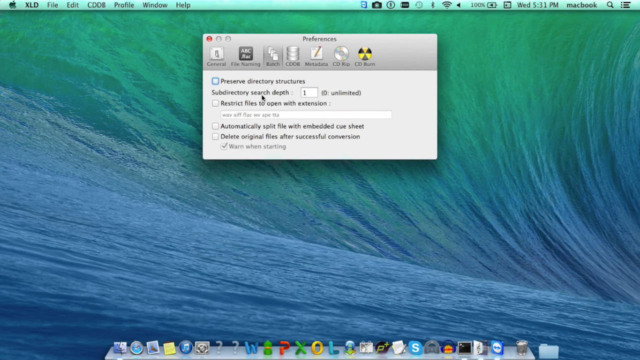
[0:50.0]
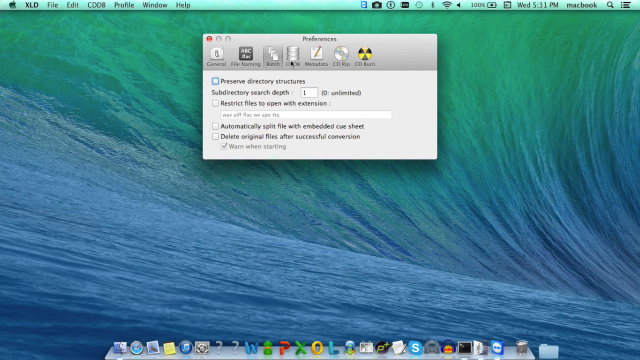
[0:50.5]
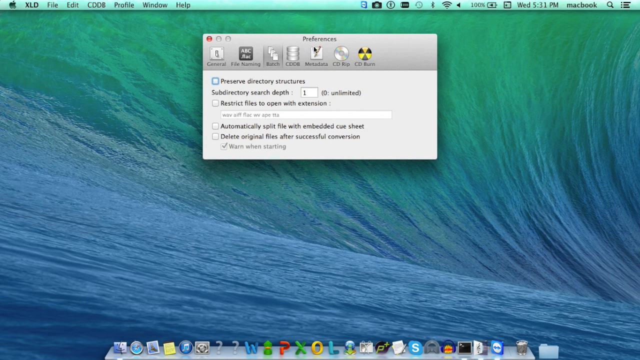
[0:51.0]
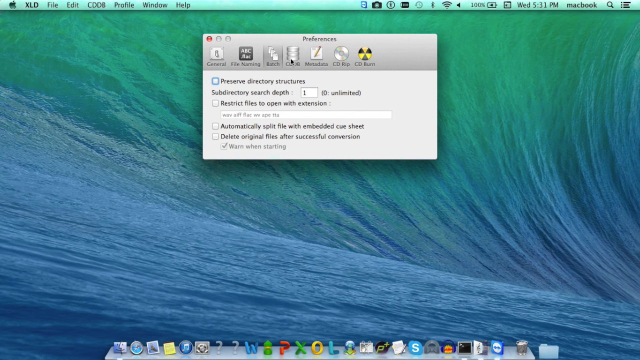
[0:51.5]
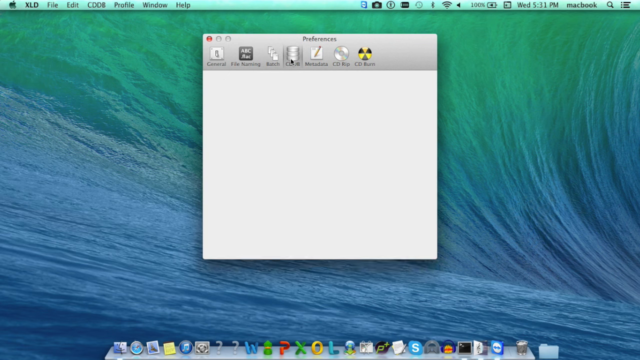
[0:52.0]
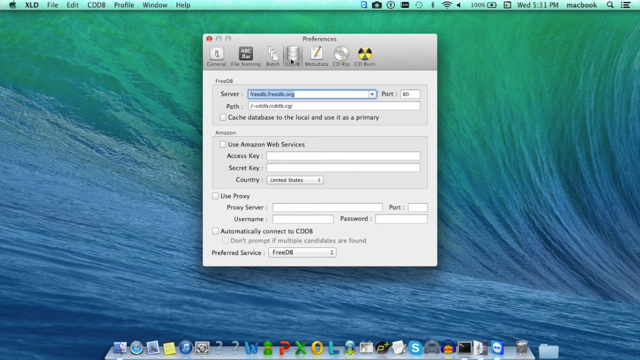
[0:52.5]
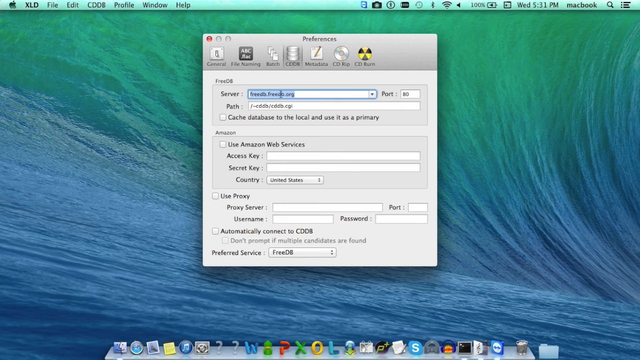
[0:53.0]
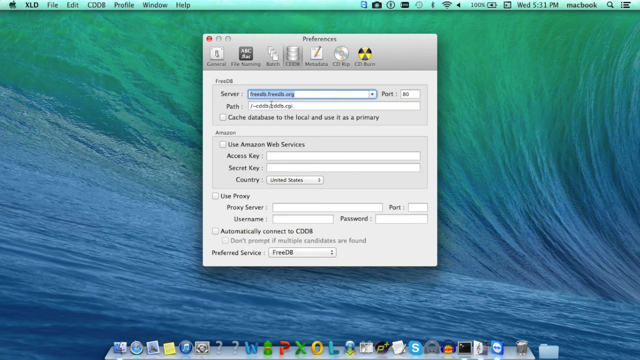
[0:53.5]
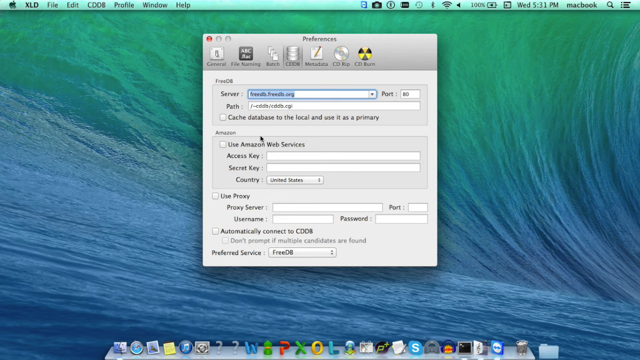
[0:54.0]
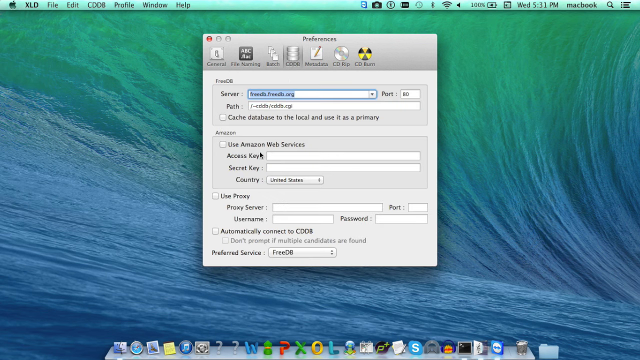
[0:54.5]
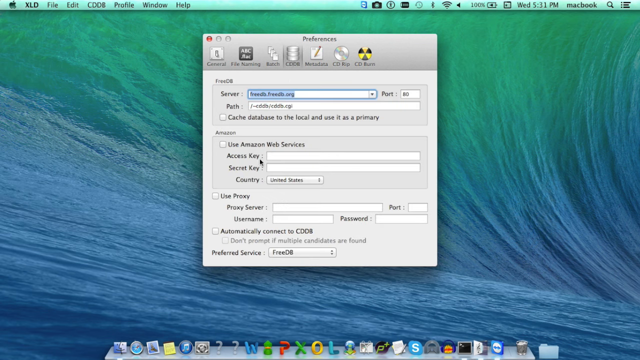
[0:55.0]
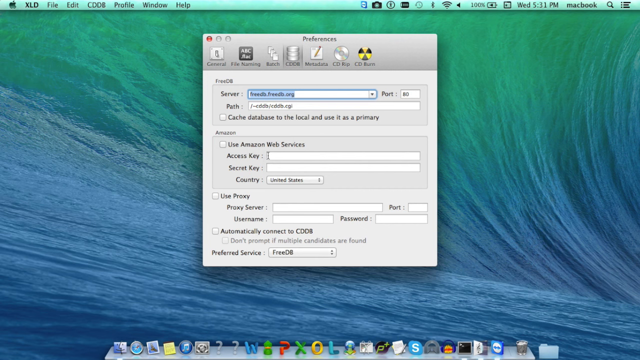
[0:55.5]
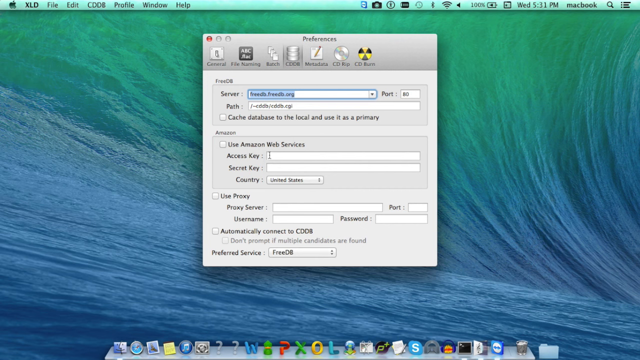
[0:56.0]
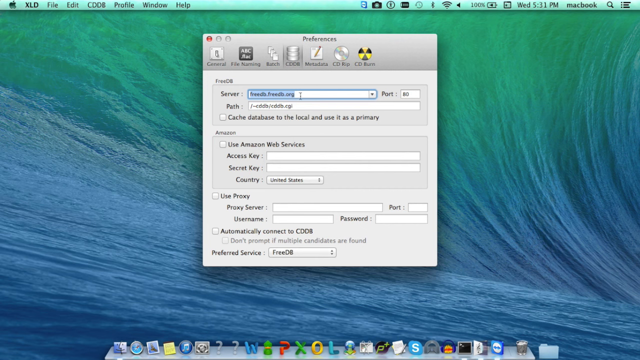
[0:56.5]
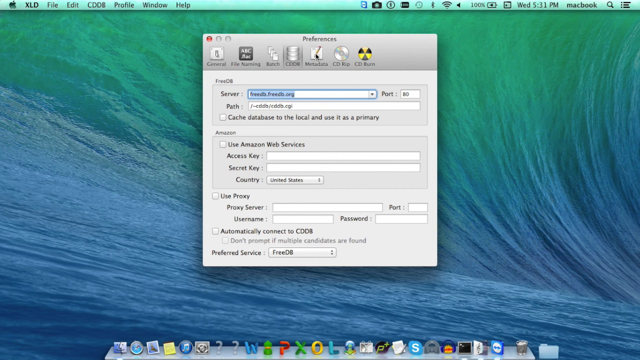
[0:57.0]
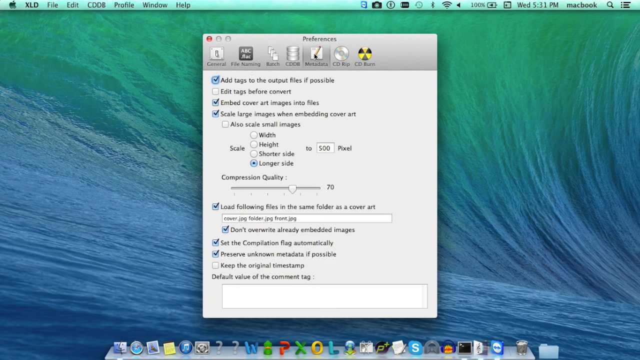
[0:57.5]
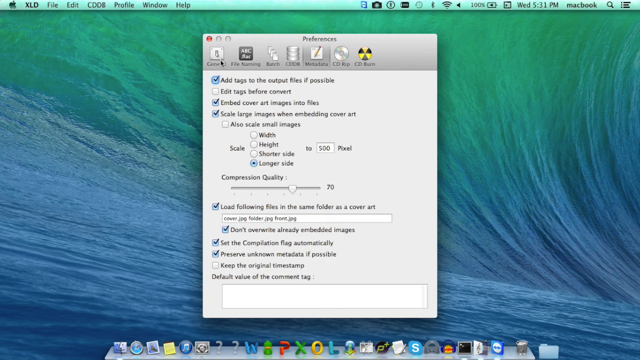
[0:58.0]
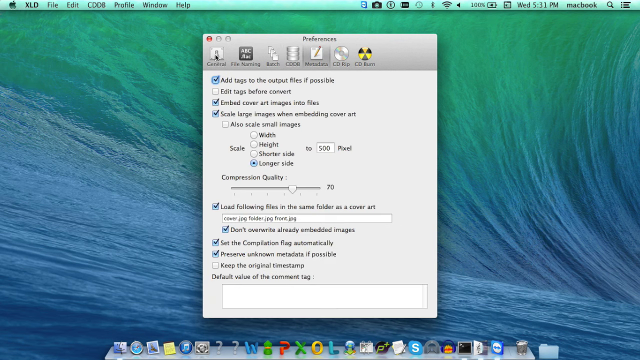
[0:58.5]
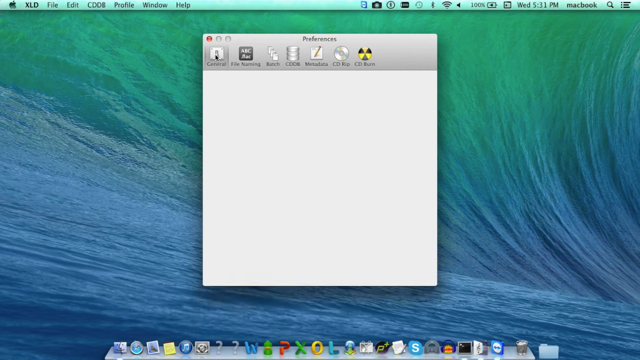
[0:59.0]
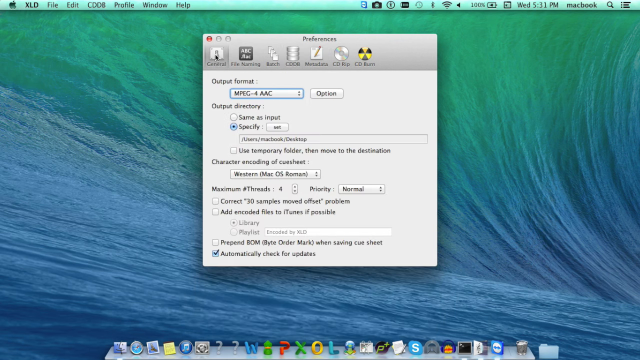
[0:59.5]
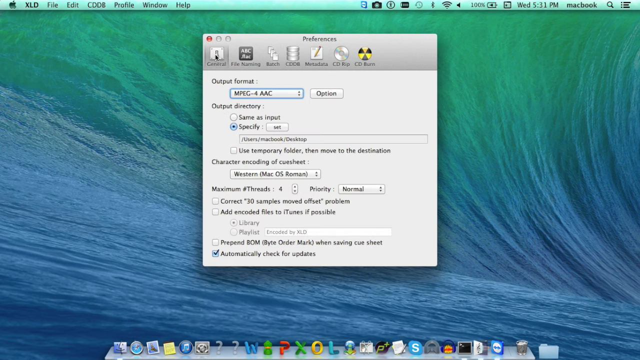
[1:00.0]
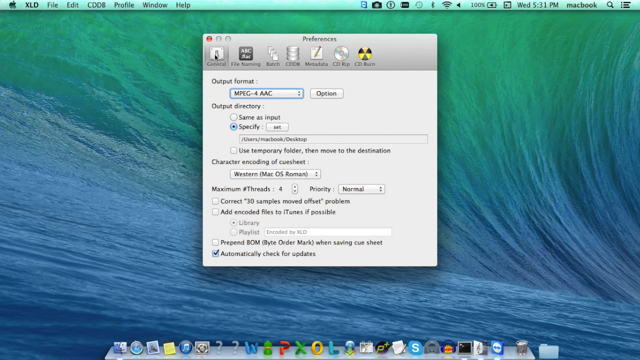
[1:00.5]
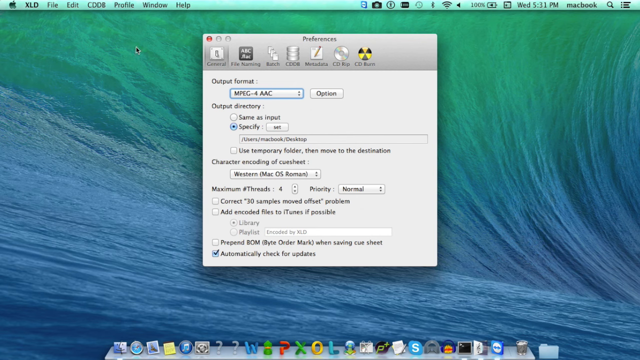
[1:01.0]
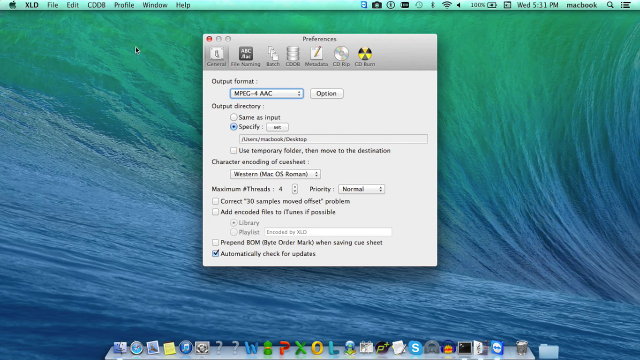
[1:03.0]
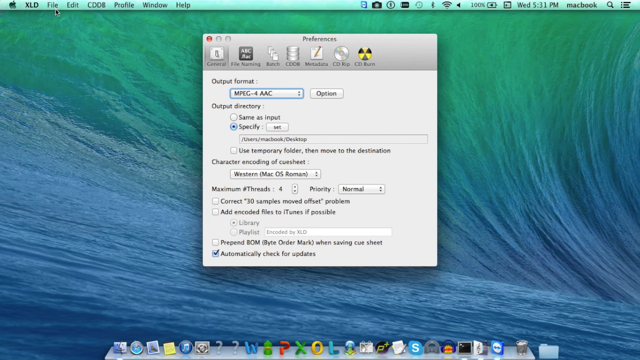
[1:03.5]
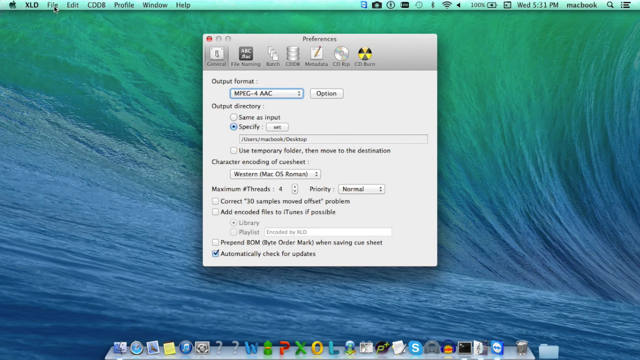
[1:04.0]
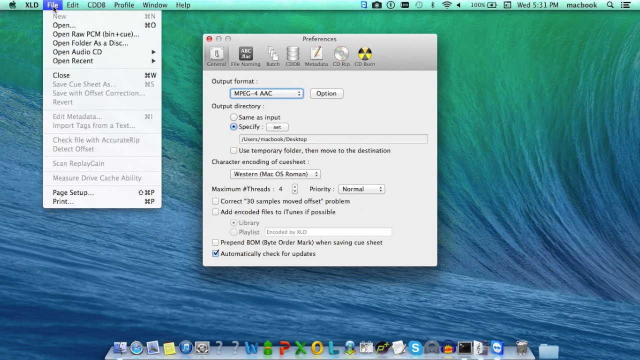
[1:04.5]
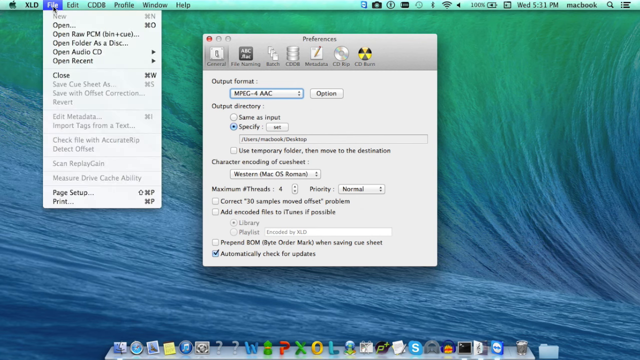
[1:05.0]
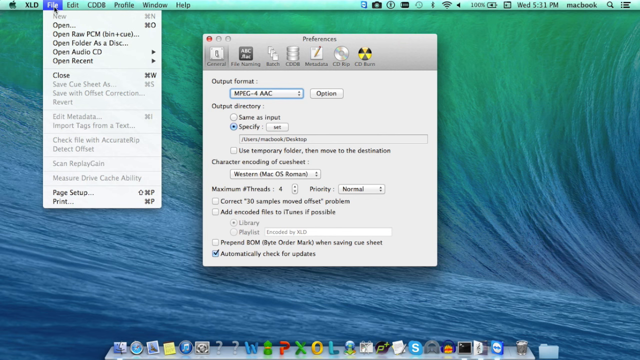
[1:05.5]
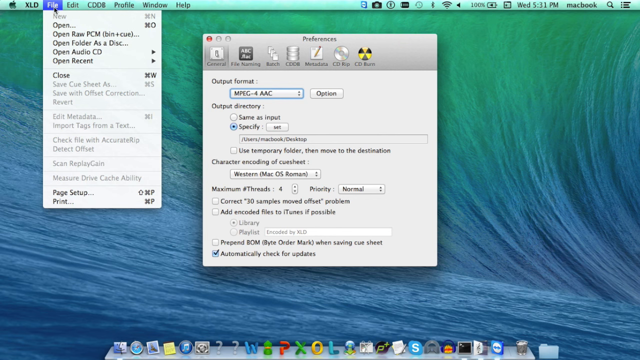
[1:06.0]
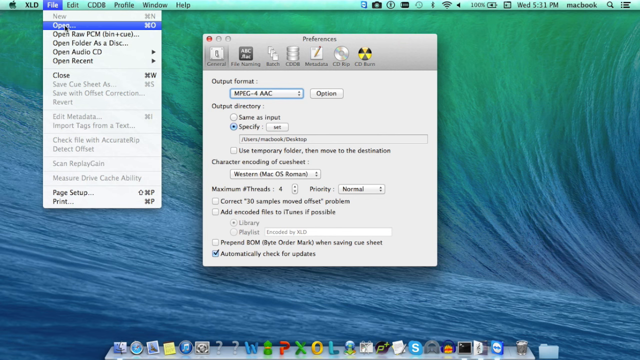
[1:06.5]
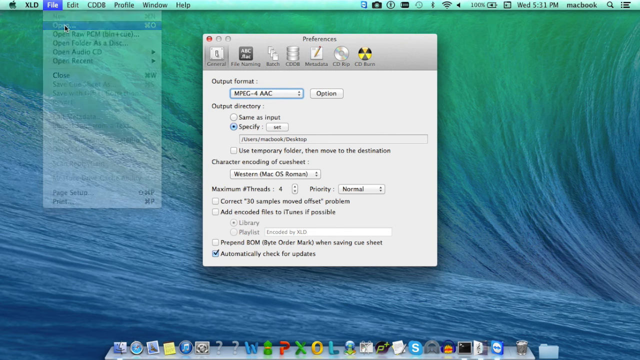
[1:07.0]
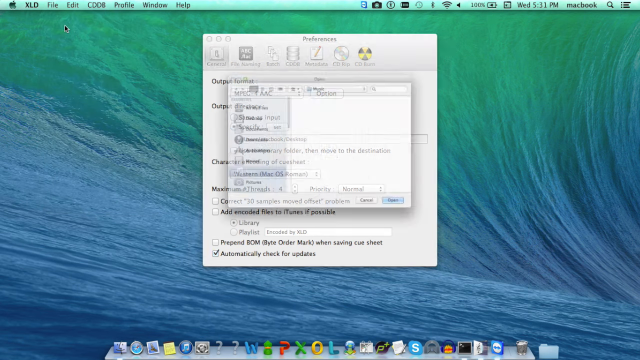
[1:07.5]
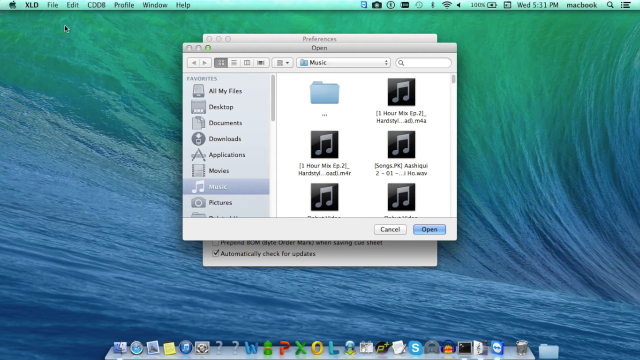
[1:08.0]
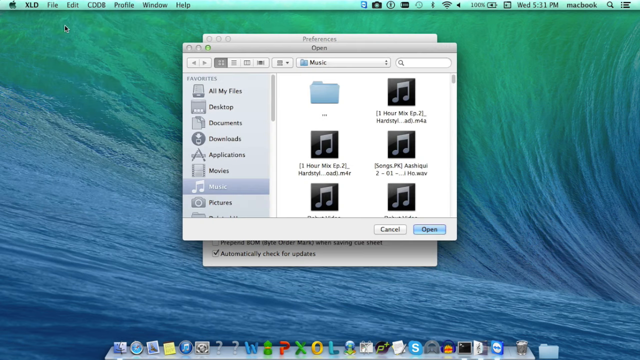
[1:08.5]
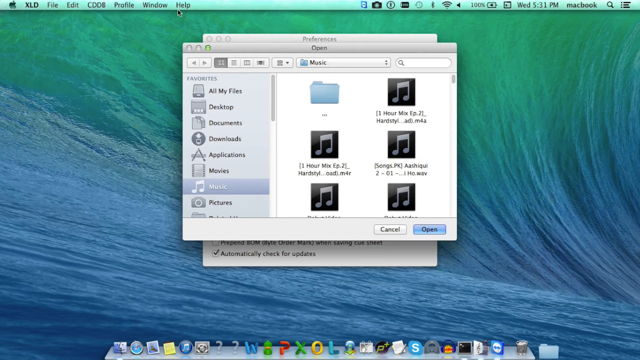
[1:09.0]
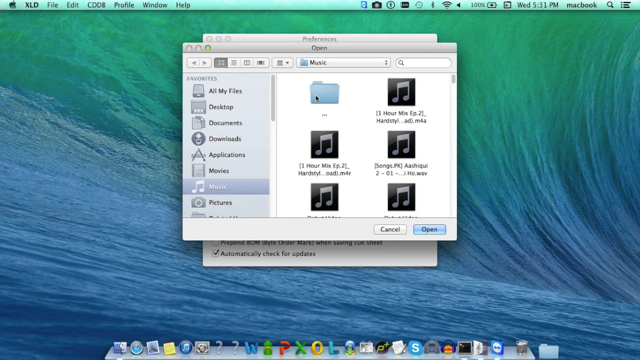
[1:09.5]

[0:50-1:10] The preferences page is still open and another selection is made. A server appears to be populated, and one click returns to the general page. File open is then chosen in the top left, next to XLD, and an Explorer open-file window pops open. No file is selected, and the shot ends on this open-file page. The font is small and hard to read. The computer appears to be an older version of Mac, a MacBook, with traditional interfaces and small wording.